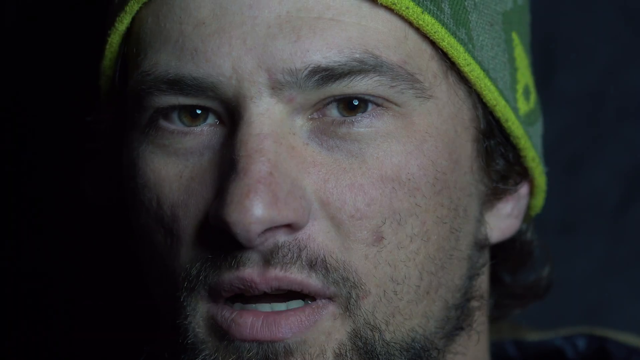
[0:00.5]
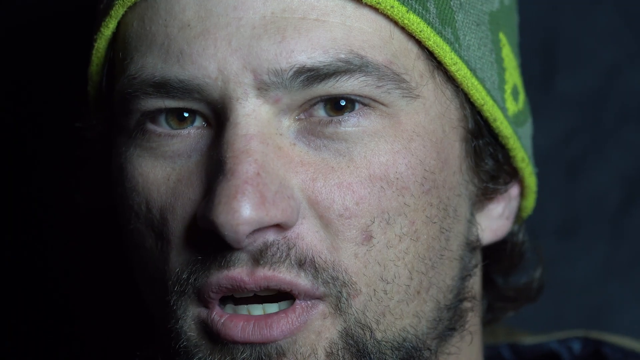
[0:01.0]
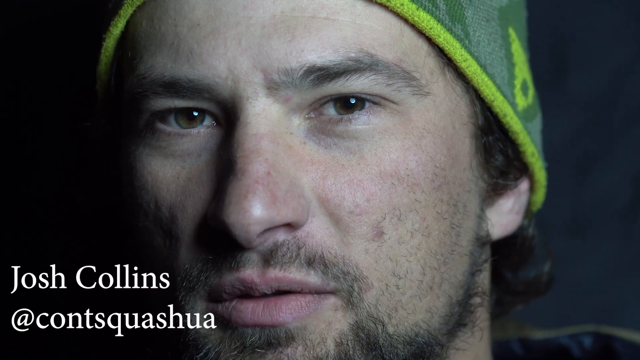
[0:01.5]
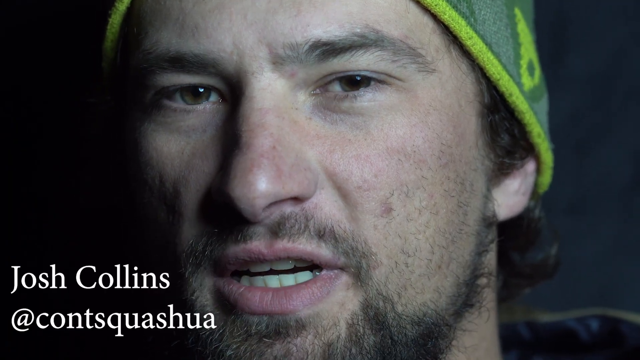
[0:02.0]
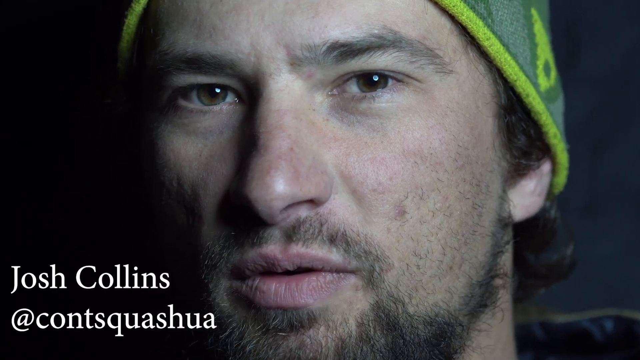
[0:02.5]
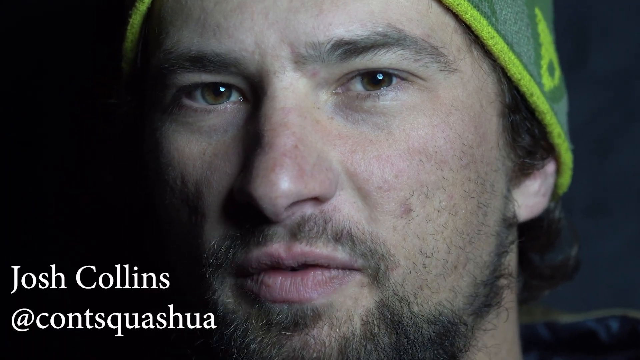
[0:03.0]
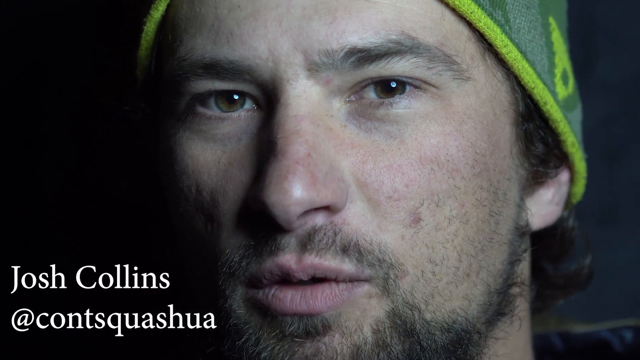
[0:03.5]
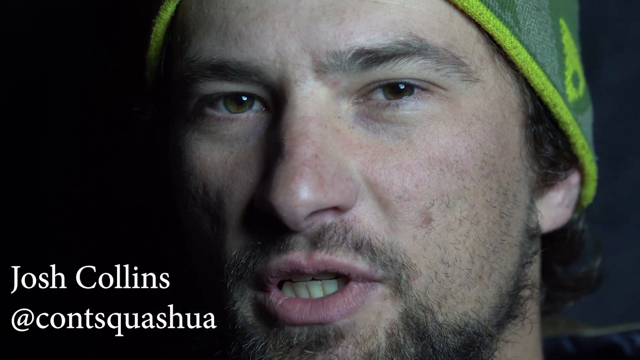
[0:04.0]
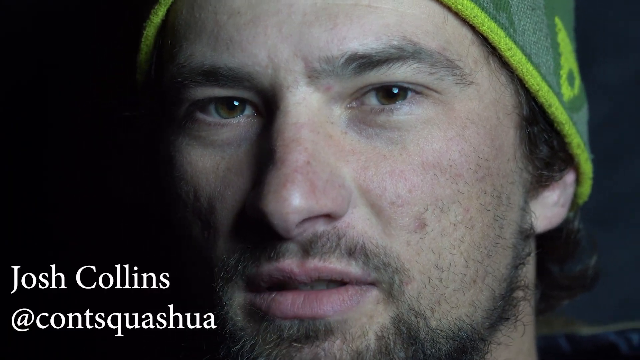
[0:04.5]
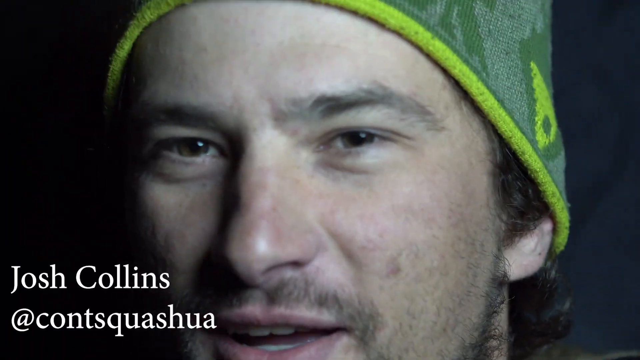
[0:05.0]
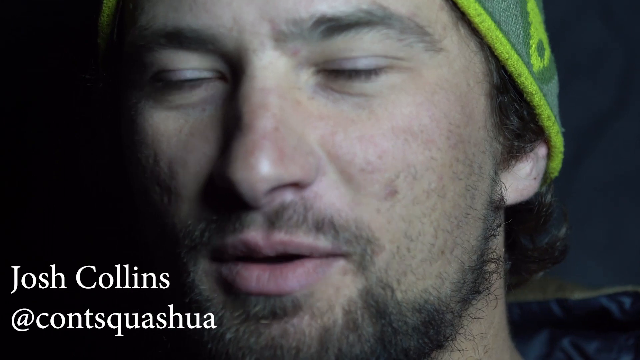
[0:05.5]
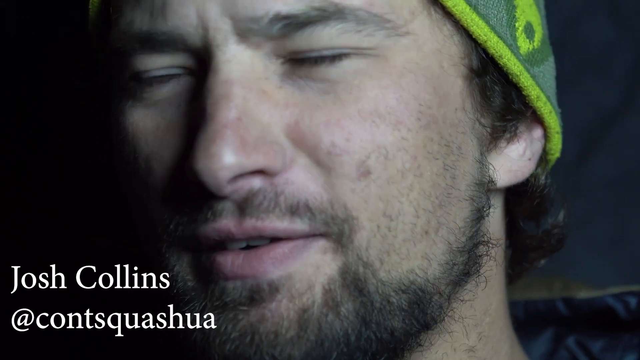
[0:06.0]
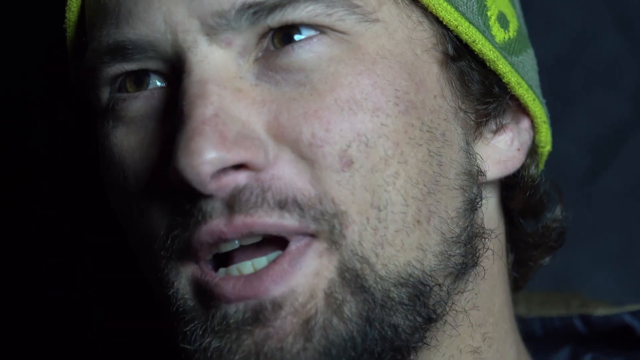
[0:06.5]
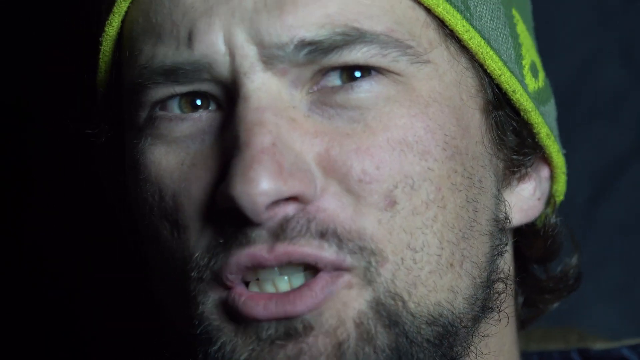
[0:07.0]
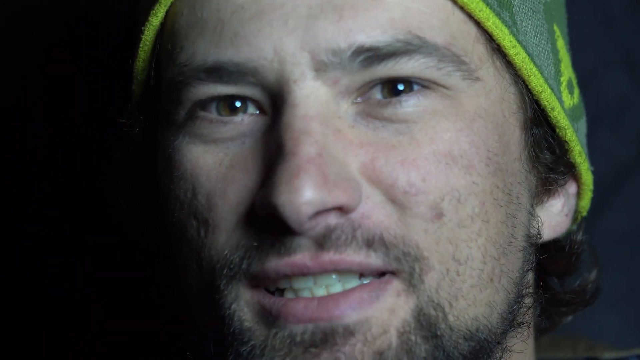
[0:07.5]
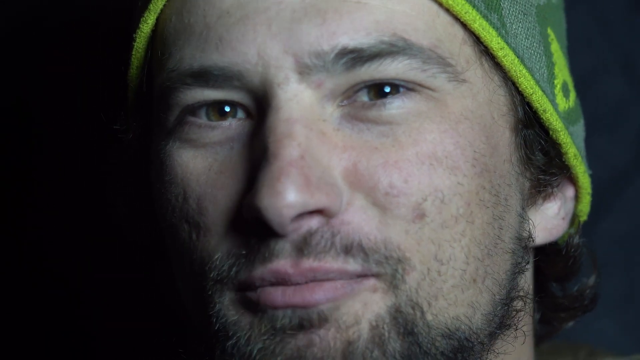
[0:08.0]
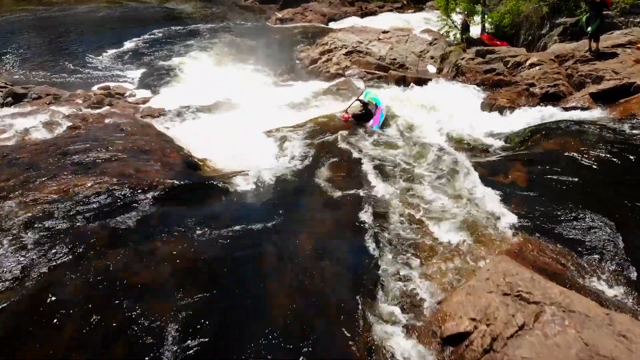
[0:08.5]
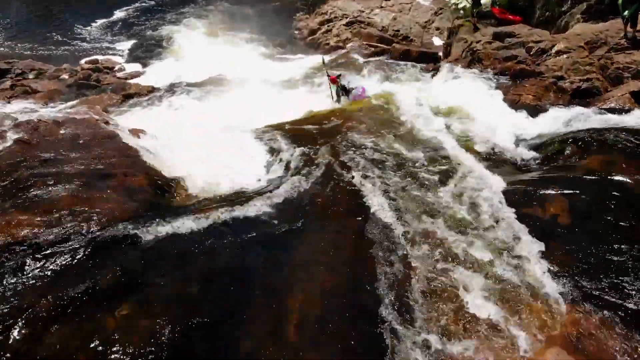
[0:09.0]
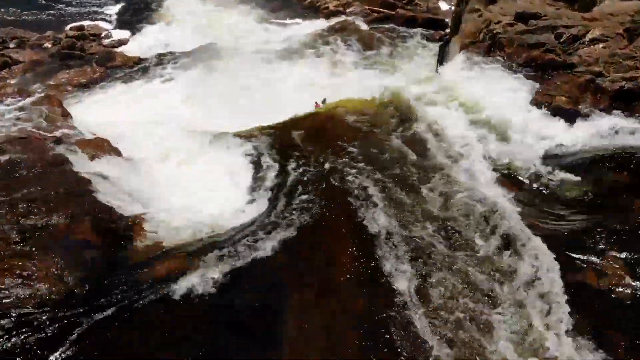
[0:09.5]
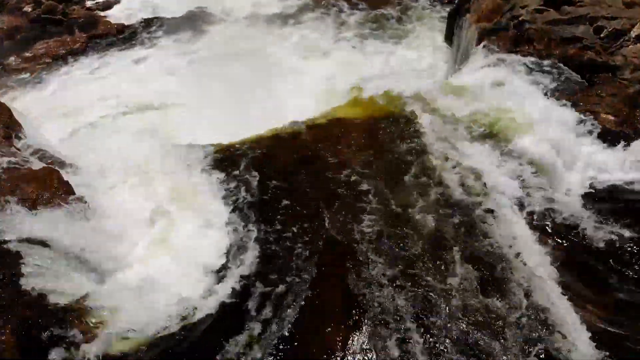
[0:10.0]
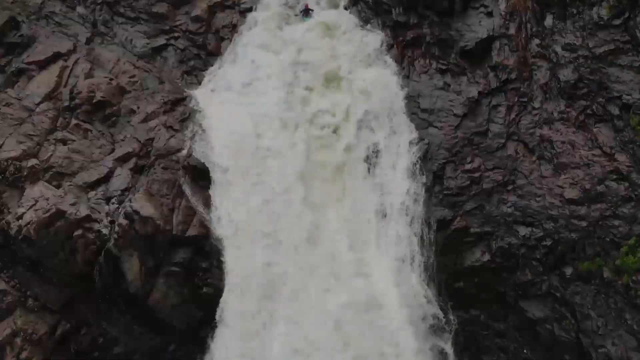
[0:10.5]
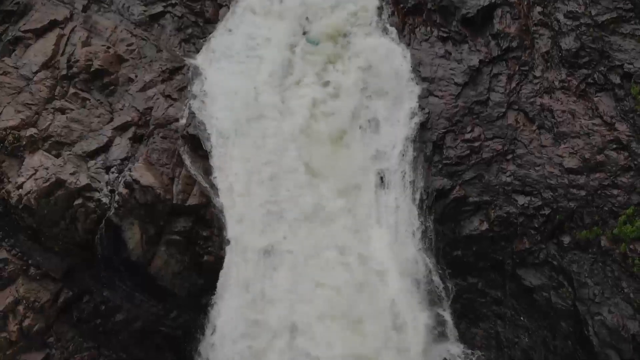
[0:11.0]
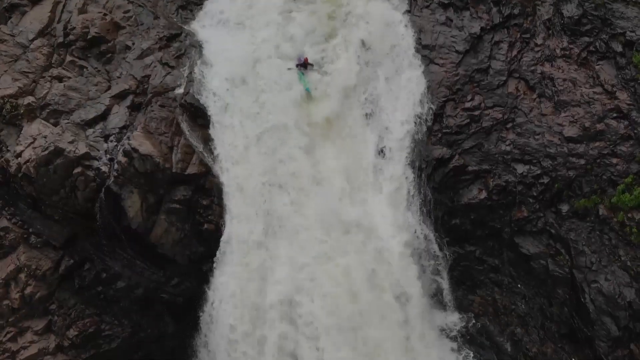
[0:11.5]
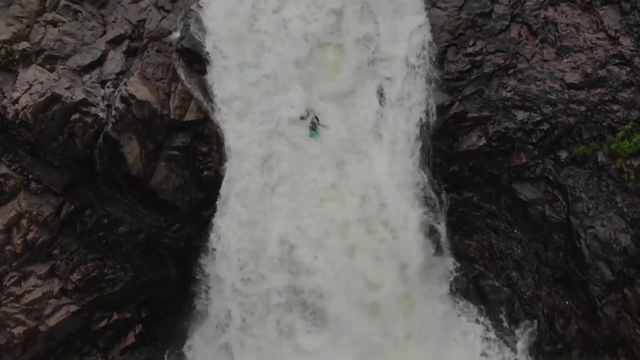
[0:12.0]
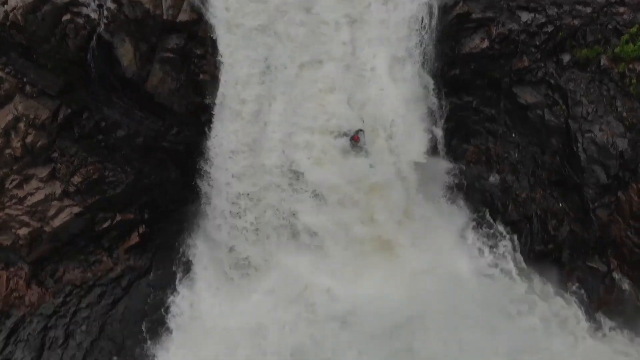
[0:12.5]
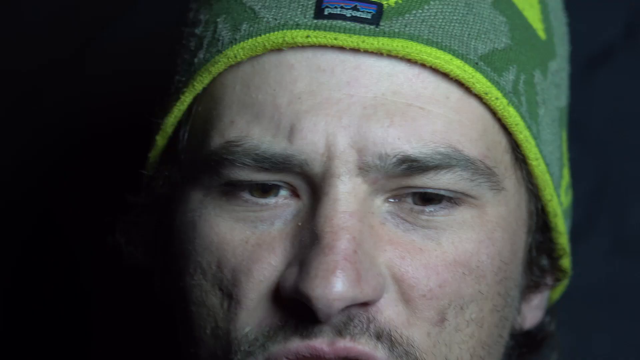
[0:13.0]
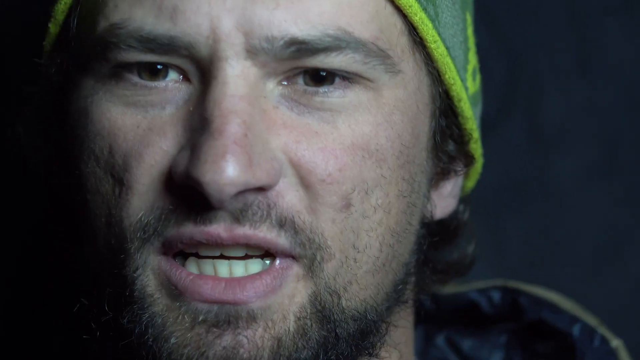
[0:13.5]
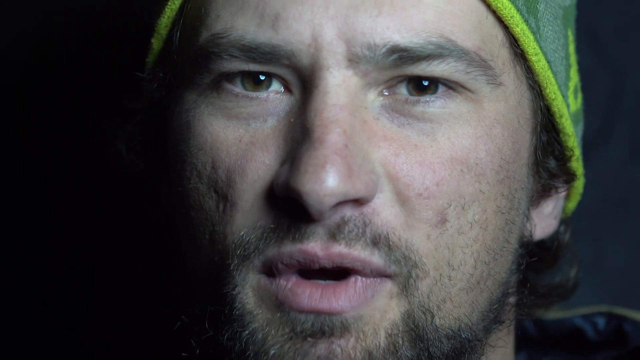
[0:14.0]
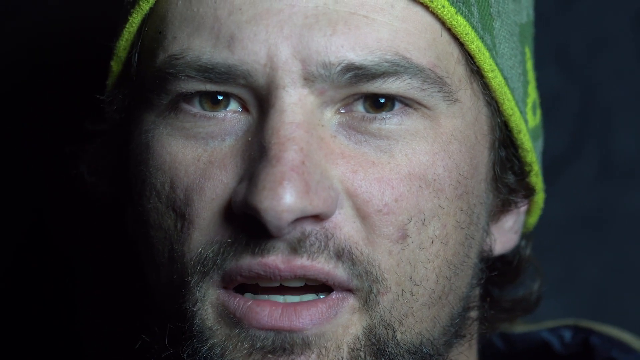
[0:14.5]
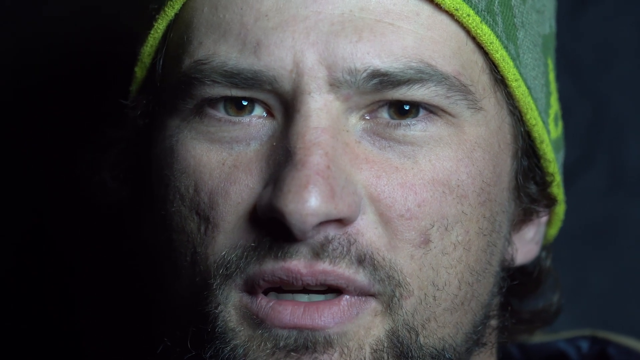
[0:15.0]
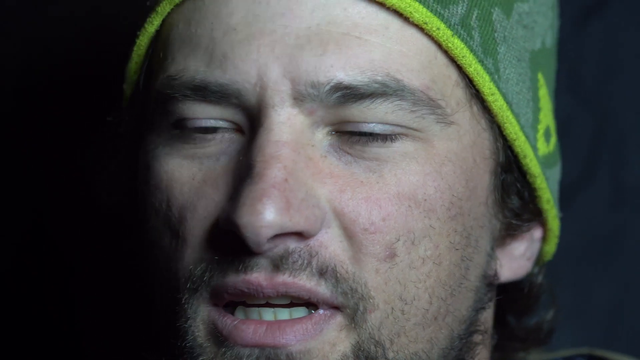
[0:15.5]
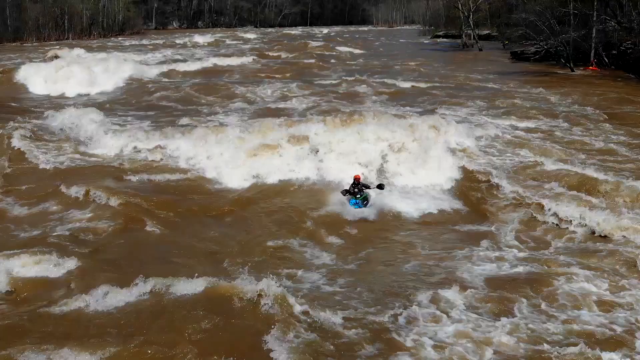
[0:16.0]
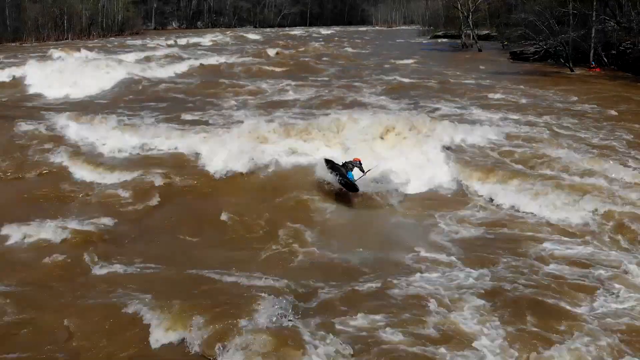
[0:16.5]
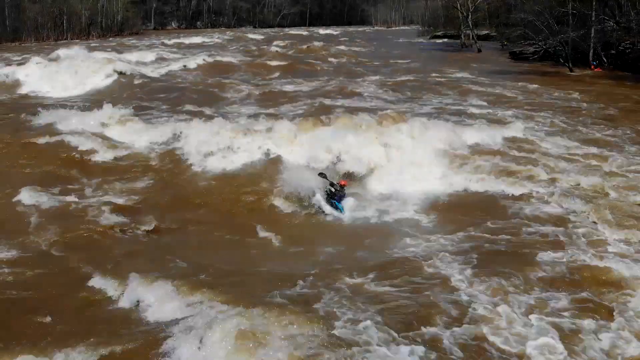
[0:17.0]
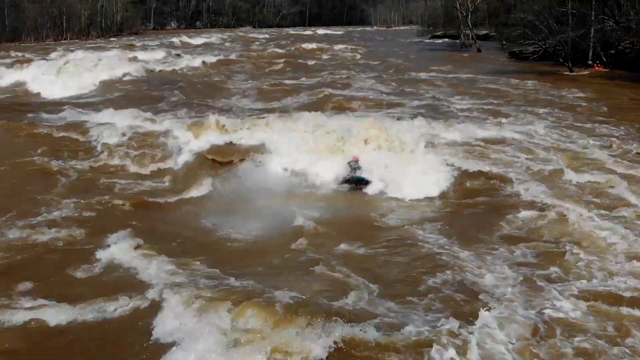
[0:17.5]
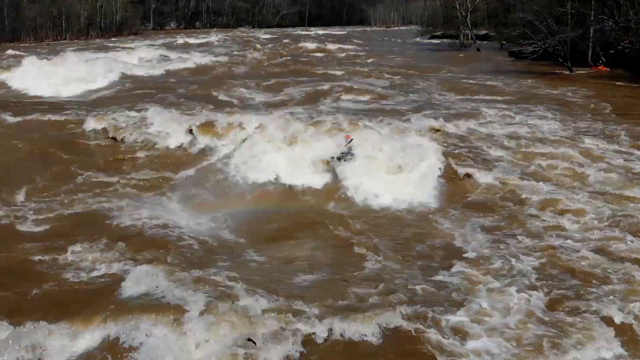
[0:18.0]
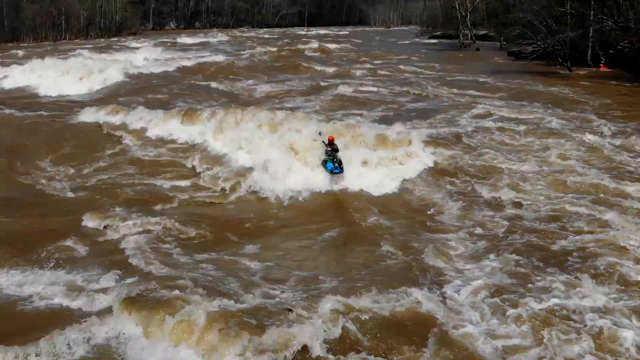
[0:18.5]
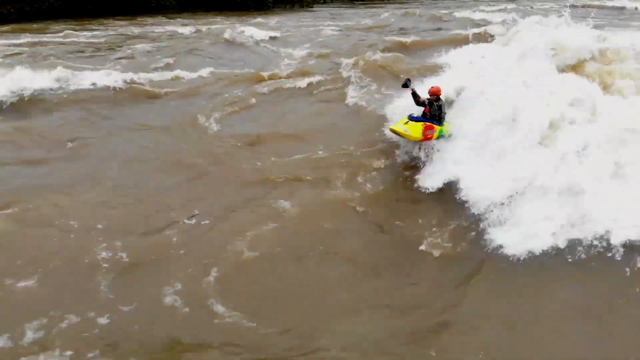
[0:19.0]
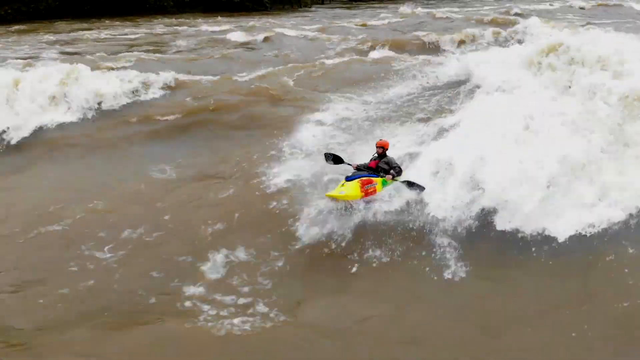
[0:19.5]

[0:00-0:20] Josh Collins appears on screen with what appears to be his Twitter handle below his name. He wears a green and yellow beanie and seems to be narrating as footage shows him canoeing on a high-current stream or river. The stream seems to have waterfalls and dangerous, high-current stretches of water. The water seems very dirty, with a brownish color.